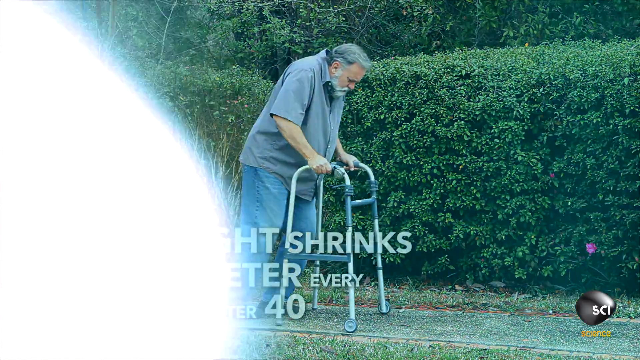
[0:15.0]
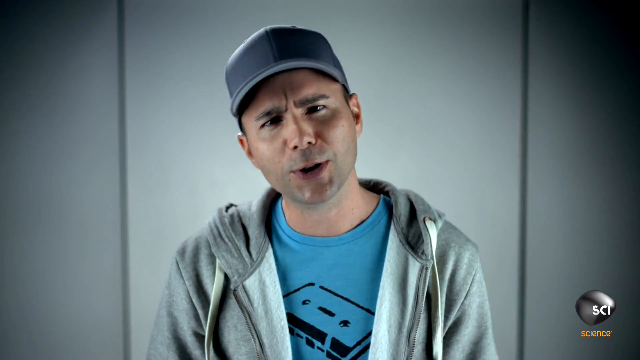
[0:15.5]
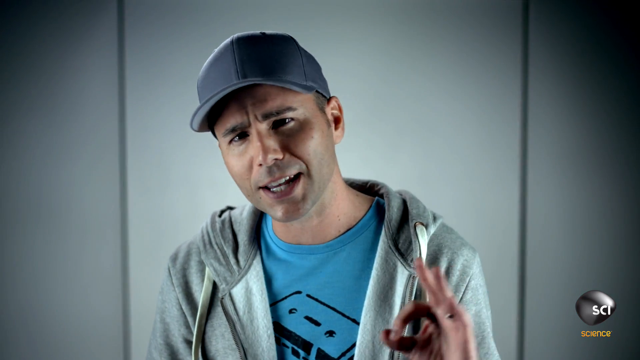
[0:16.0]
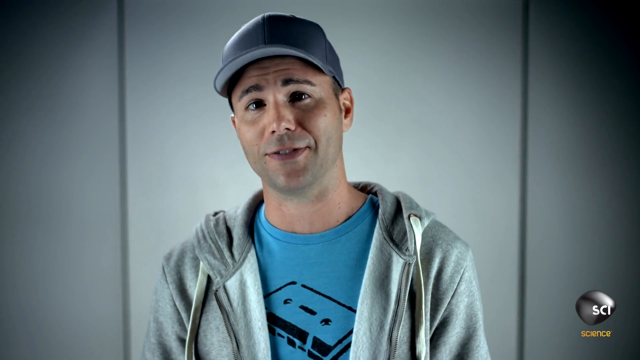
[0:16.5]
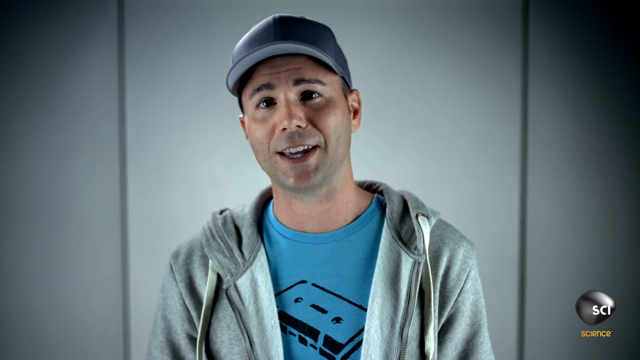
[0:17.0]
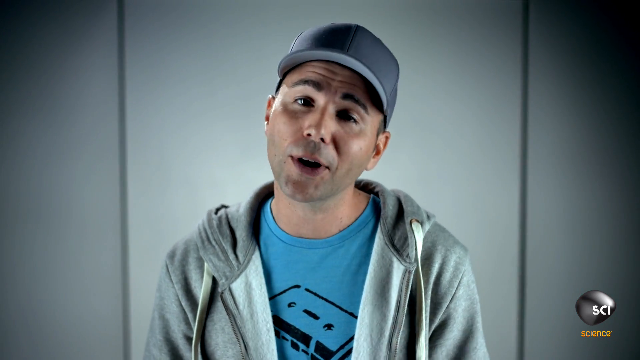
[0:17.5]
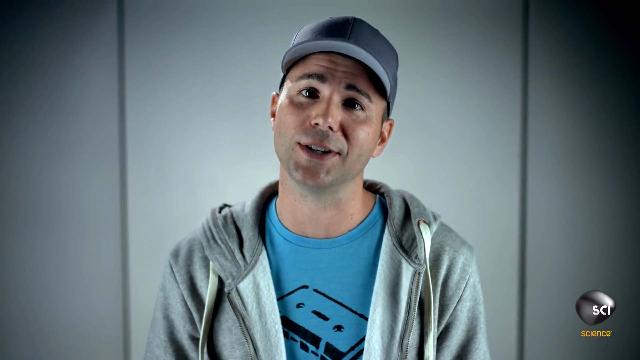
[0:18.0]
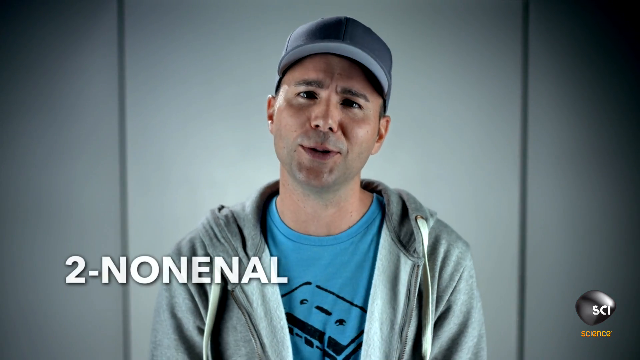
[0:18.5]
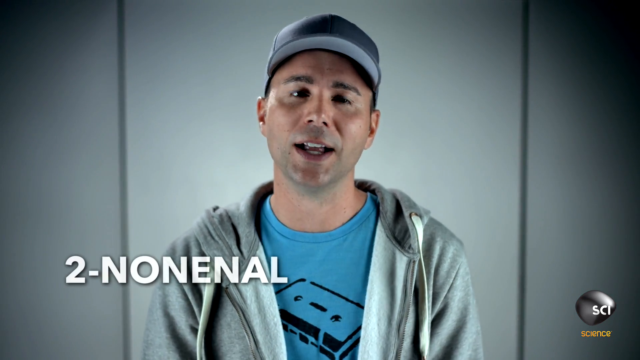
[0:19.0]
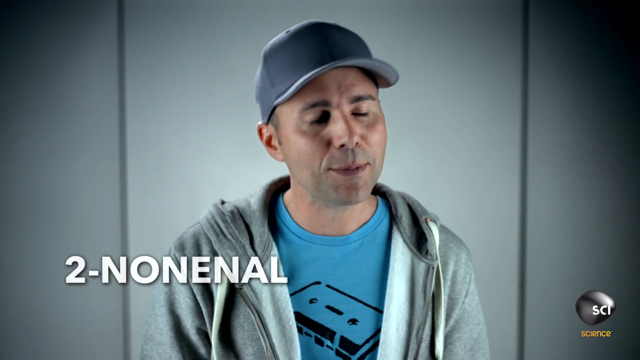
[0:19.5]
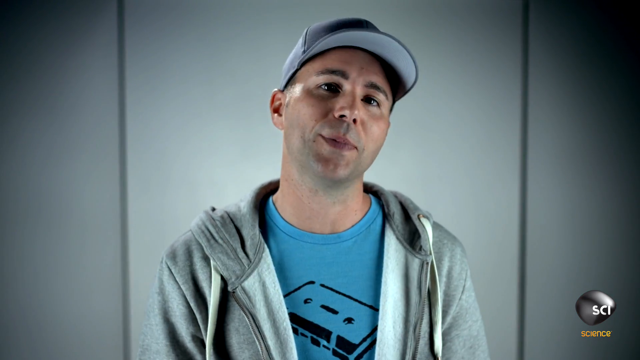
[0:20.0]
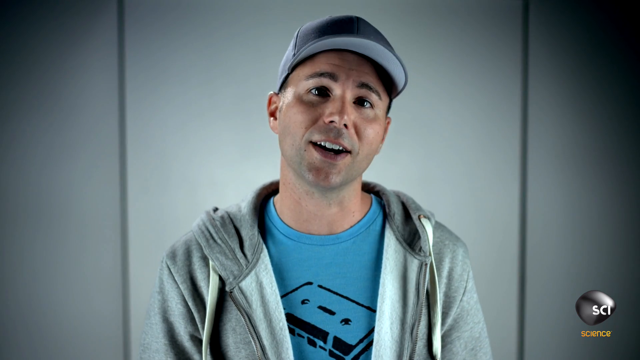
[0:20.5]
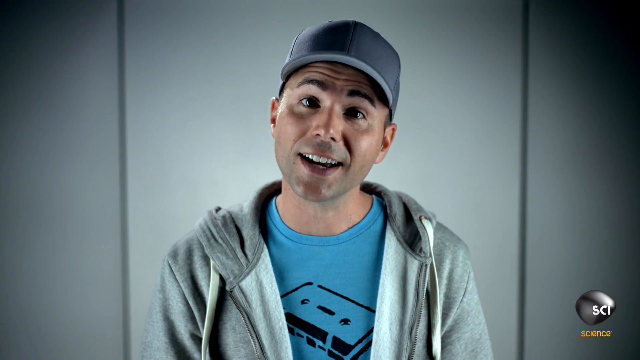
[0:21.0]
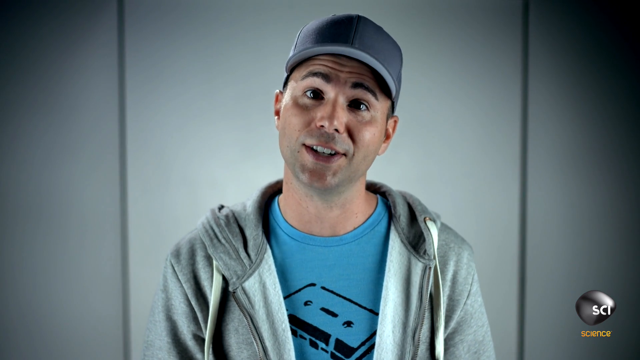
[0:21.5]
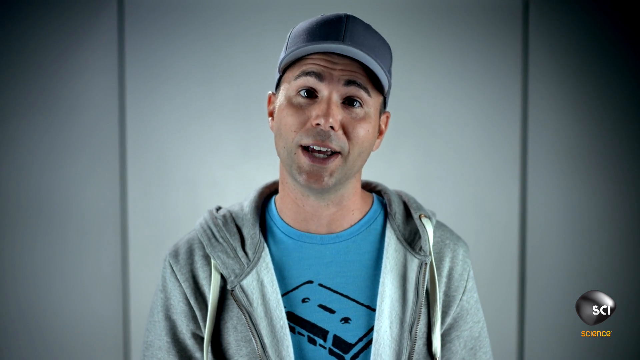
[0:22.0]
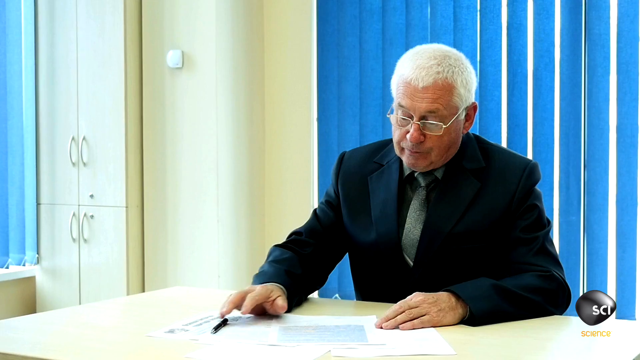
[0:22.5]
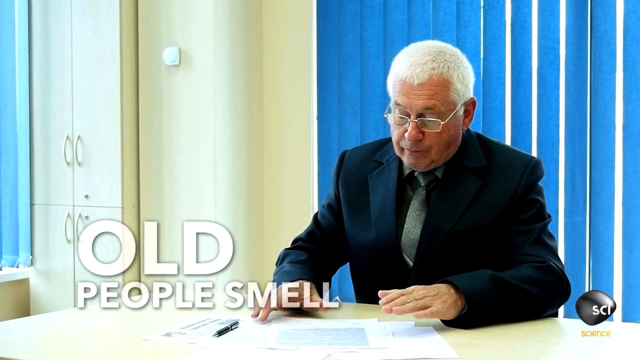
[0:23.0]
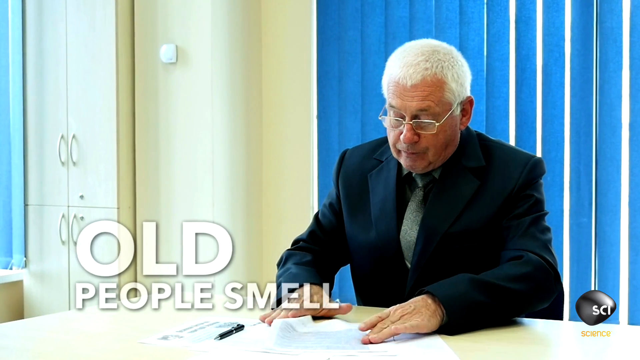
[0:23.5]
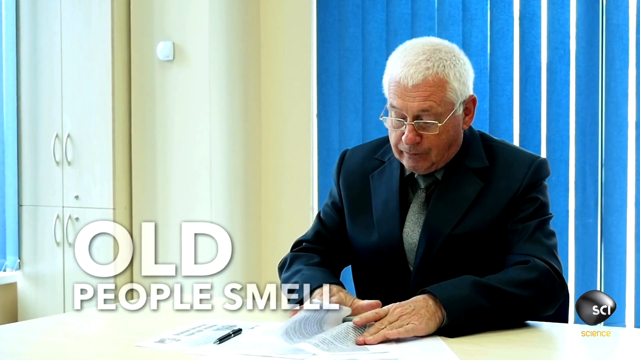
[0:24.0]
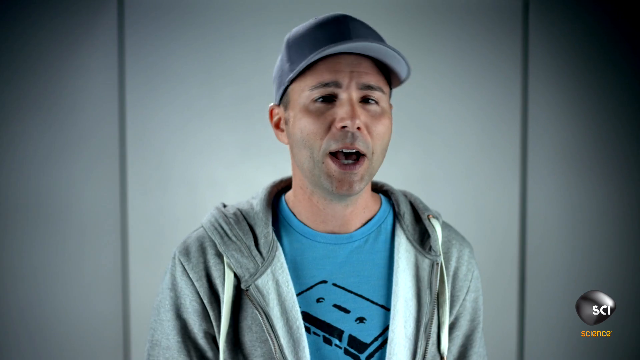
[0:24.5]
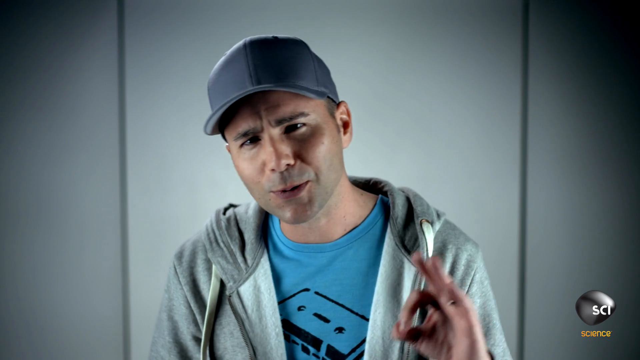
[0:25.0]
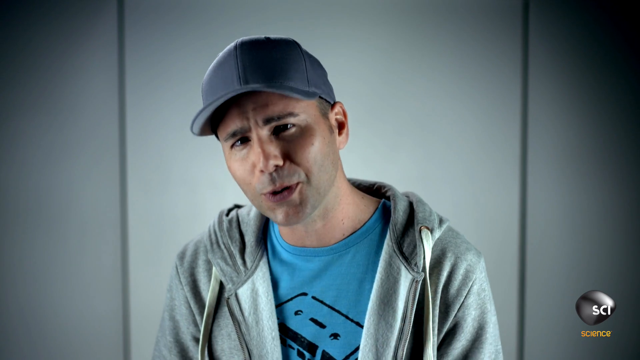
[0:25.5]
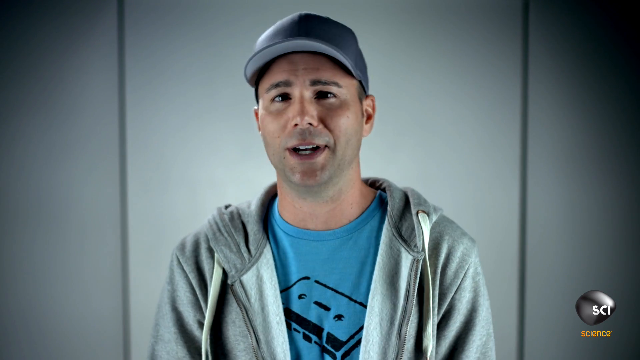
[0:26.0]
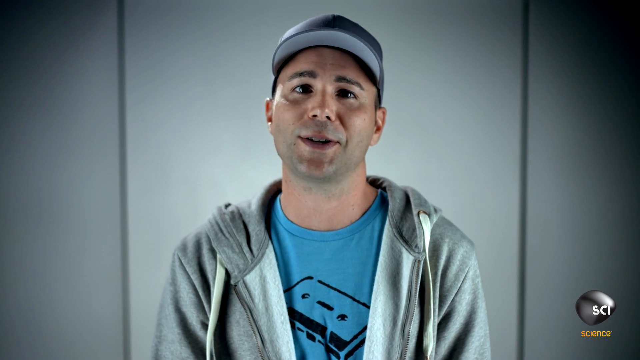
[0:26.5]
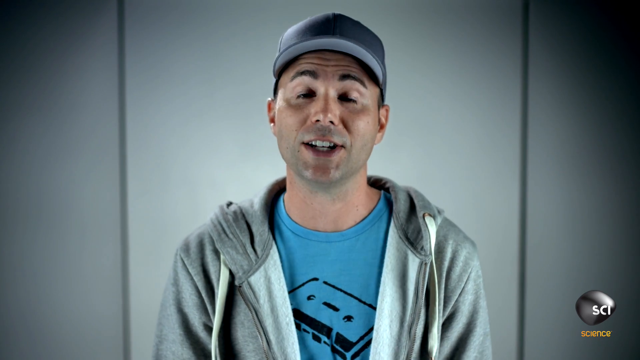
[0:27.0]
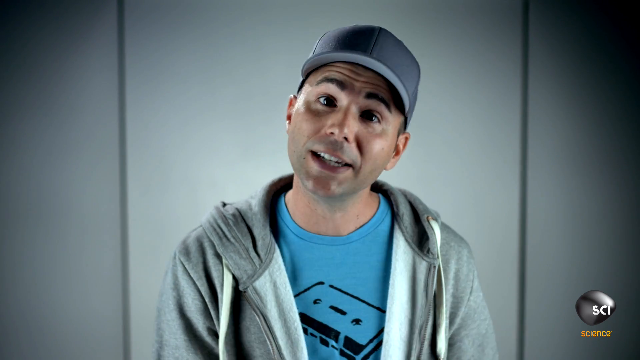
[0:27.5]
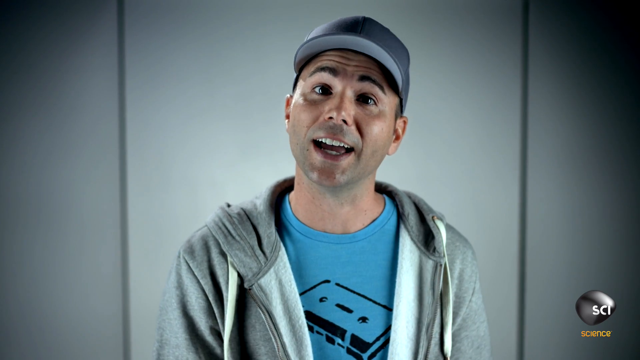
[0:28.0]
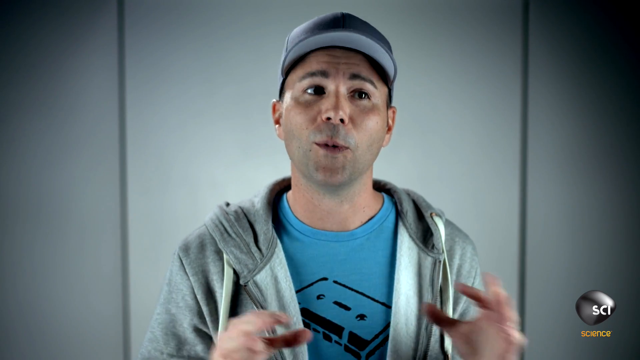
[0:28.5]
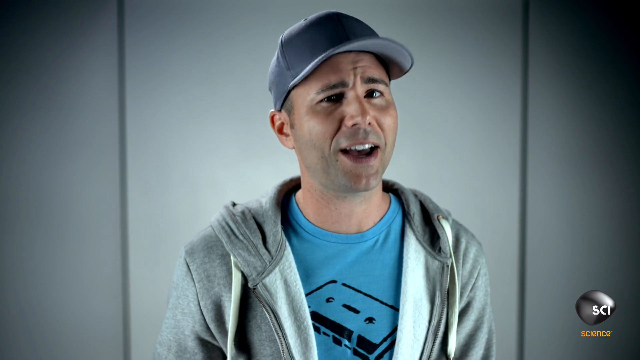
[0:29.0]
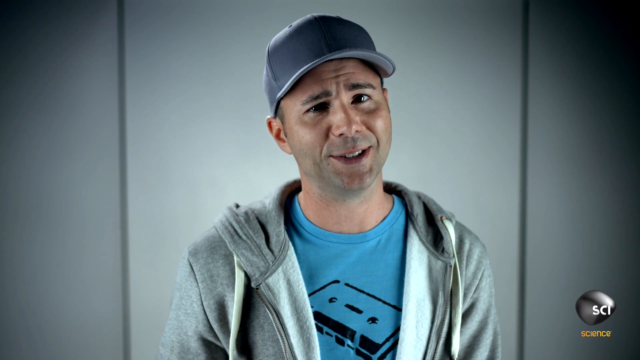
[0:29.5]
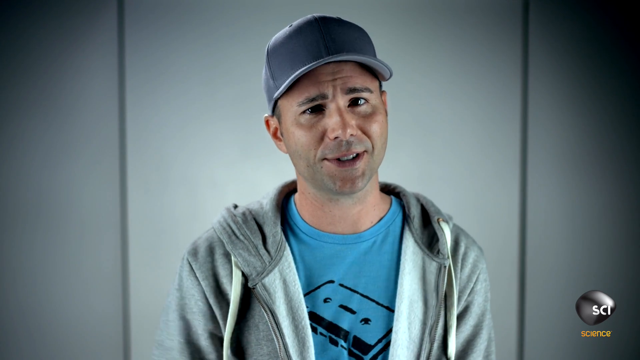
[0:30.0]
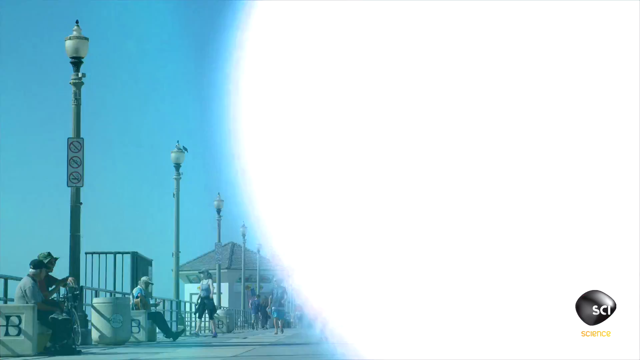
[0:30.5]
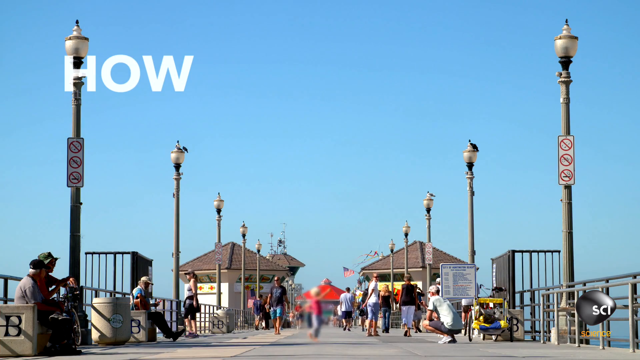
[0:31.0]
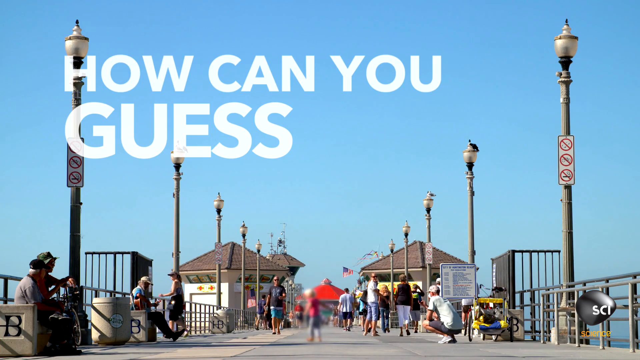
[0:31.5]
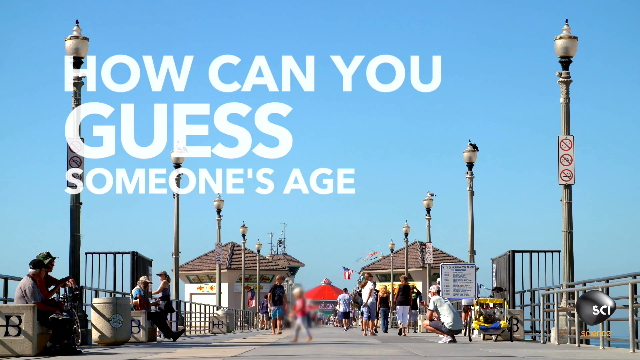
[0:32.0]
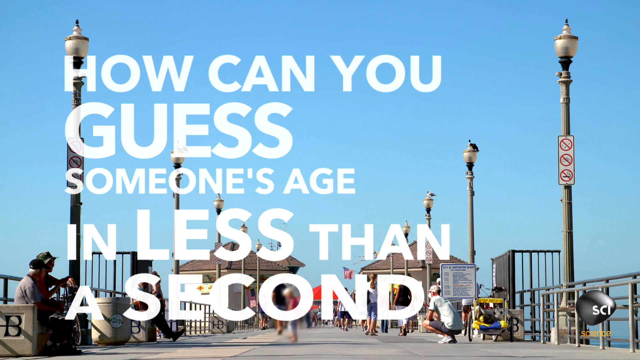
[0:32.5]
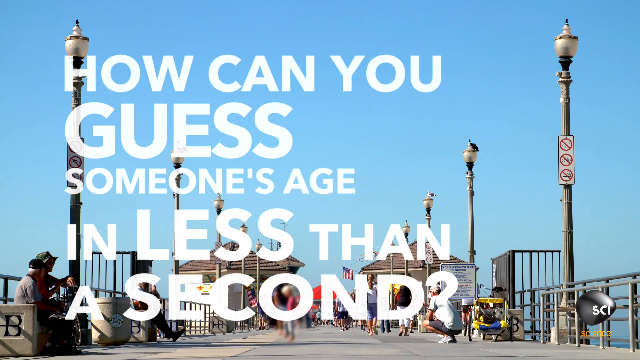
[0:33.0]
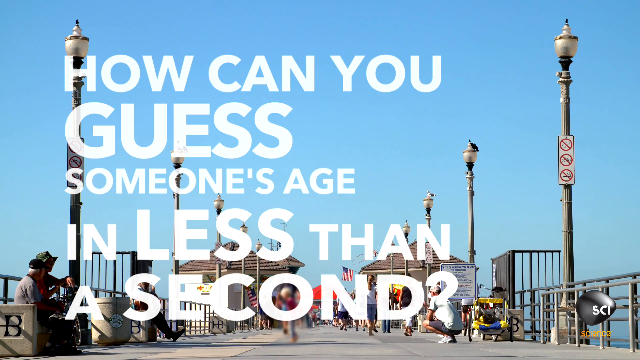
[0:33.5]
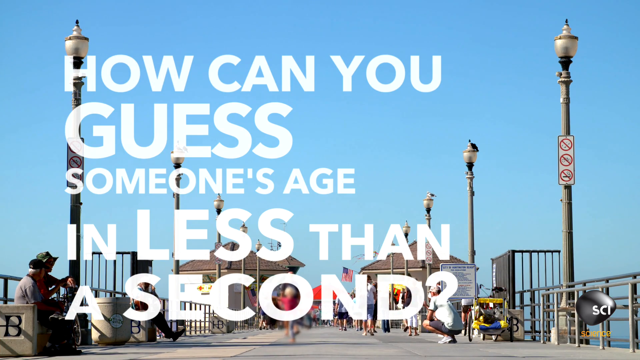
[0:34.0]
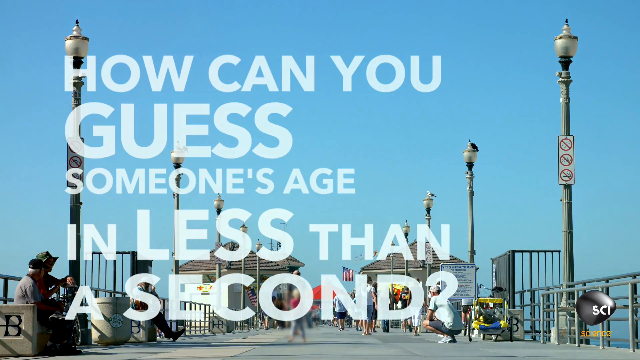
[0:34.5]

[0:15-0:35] The video returns to Mark the engineer, and the text "2 nonenal" appears, along with "old people smell." An old picture shows an old man sitting at a desk with papers on it; he has white hair and wears a black suit, glasses and a tie, looking like he is still working. In the corner the text reads "SCI Science." Mark appears again, then the scene moves to a boardwalk where a bunch of people are walking, with lampposts on the side, and the question "How can you guess someone's age in less than a second?" appears. The place looks like it is in the U.S. The shot then quickly cuts to somebody else.